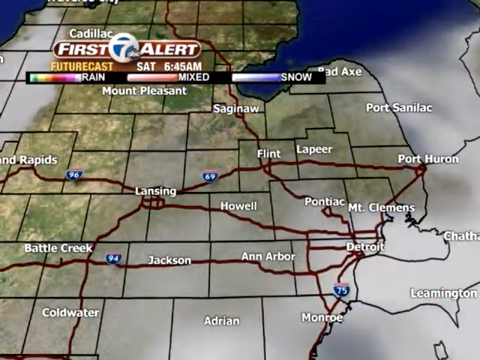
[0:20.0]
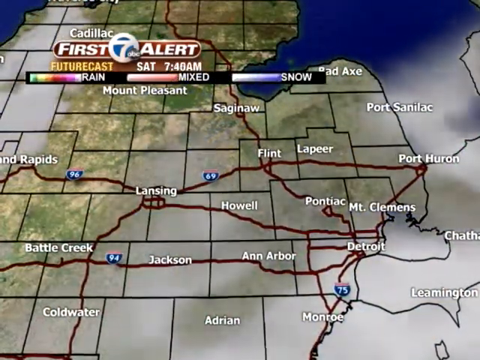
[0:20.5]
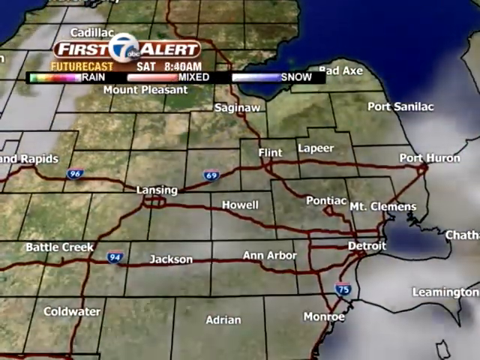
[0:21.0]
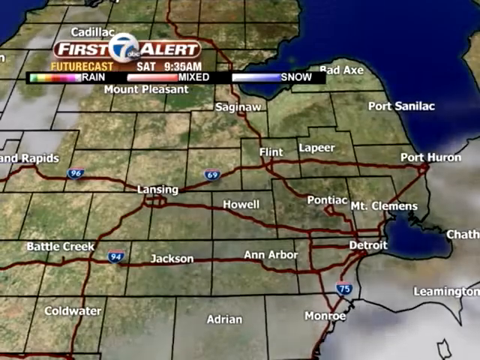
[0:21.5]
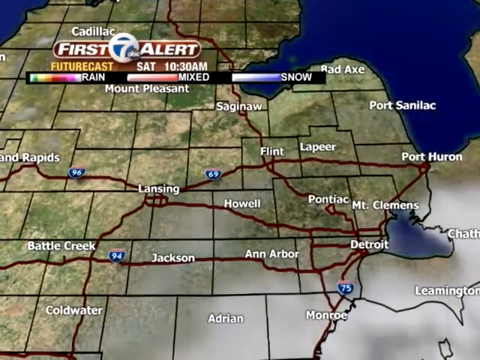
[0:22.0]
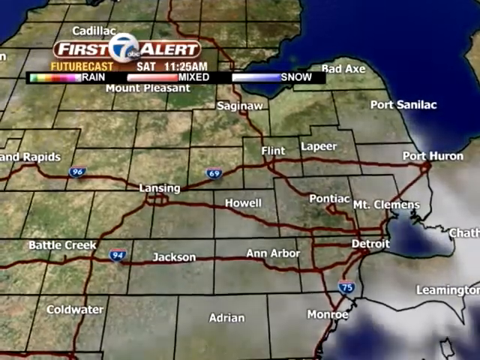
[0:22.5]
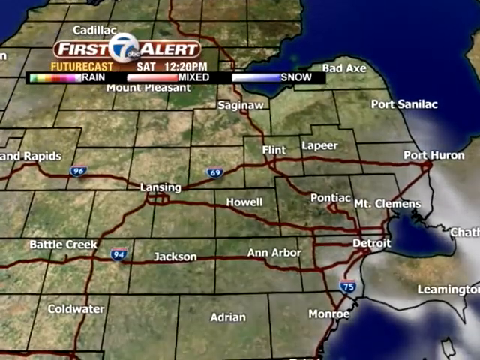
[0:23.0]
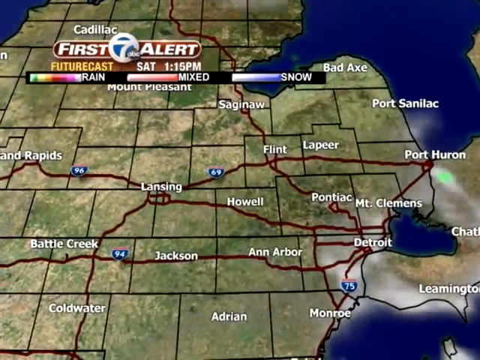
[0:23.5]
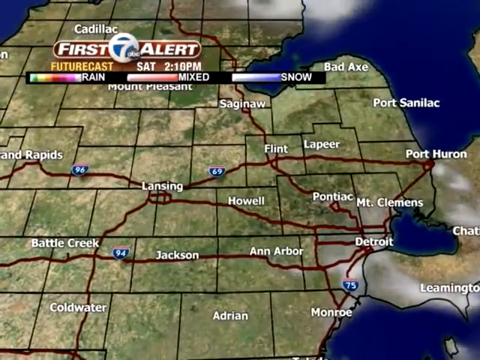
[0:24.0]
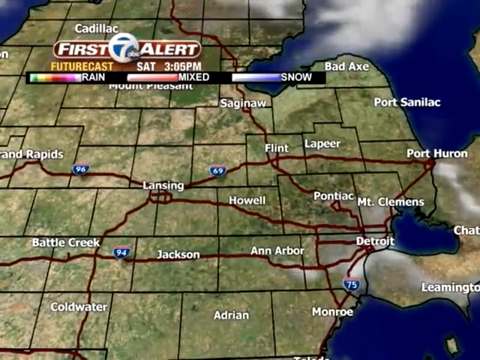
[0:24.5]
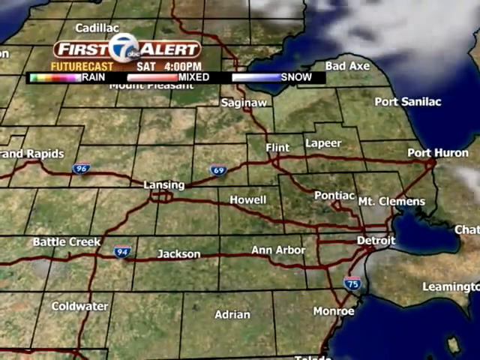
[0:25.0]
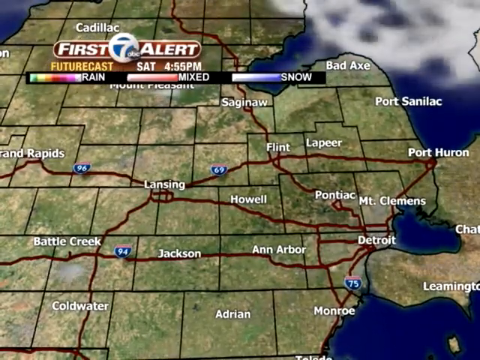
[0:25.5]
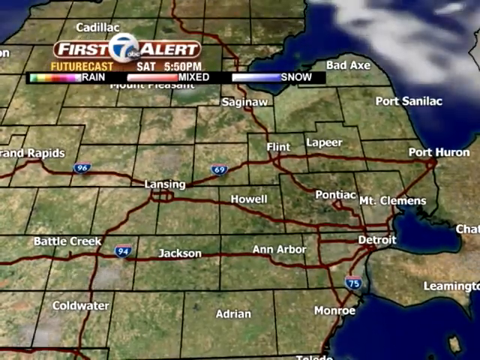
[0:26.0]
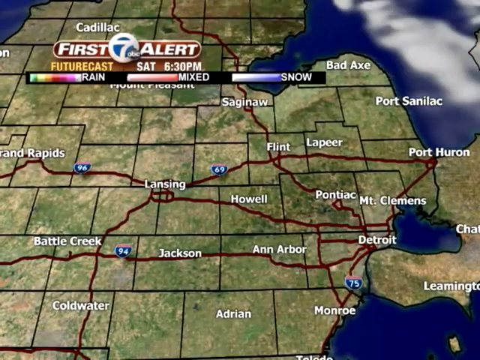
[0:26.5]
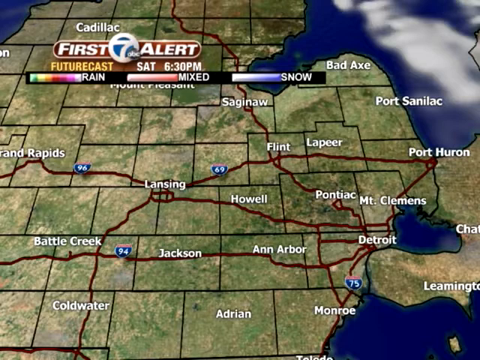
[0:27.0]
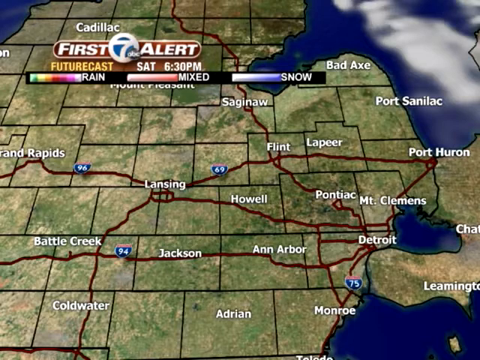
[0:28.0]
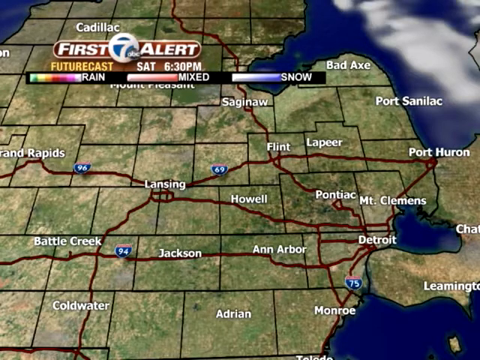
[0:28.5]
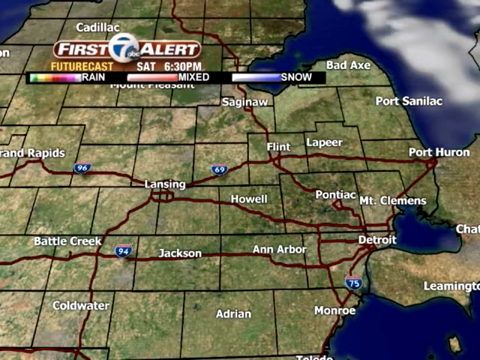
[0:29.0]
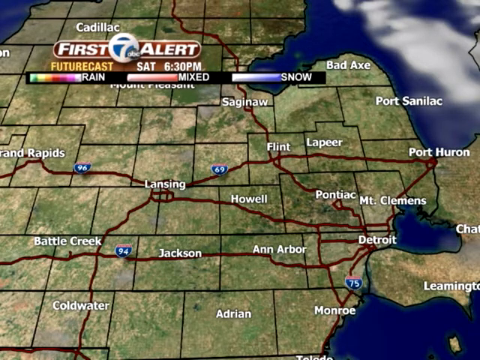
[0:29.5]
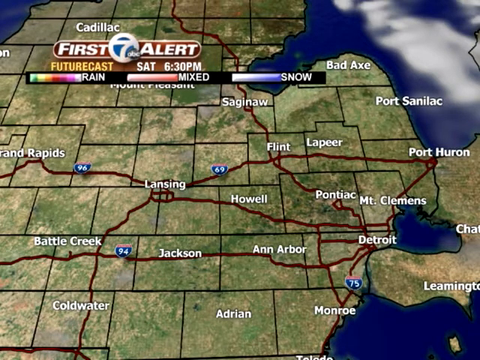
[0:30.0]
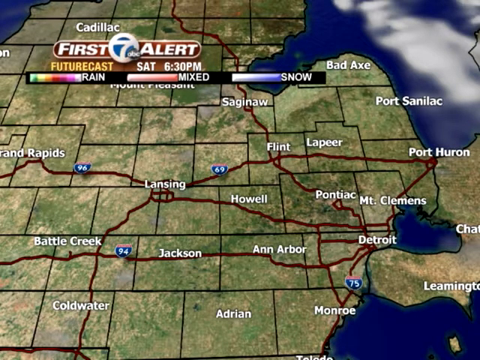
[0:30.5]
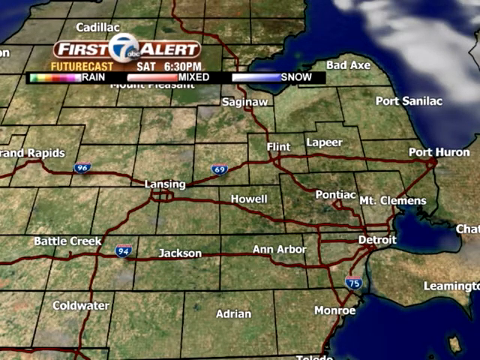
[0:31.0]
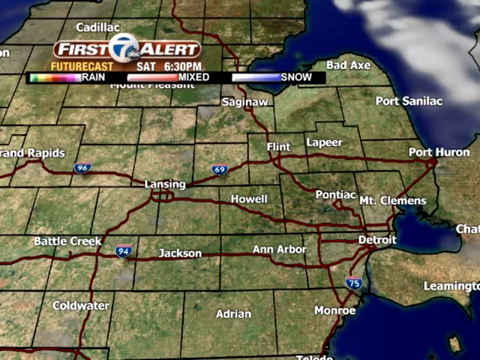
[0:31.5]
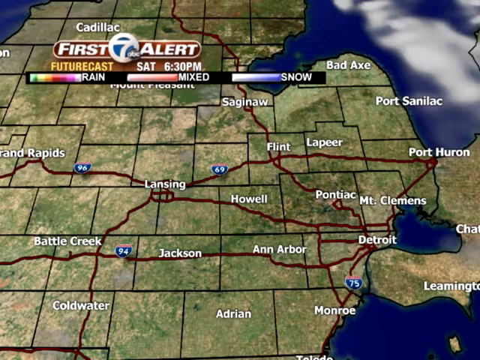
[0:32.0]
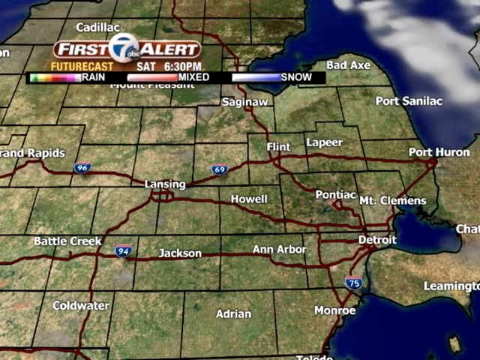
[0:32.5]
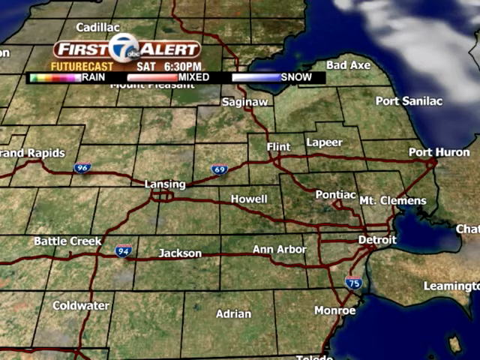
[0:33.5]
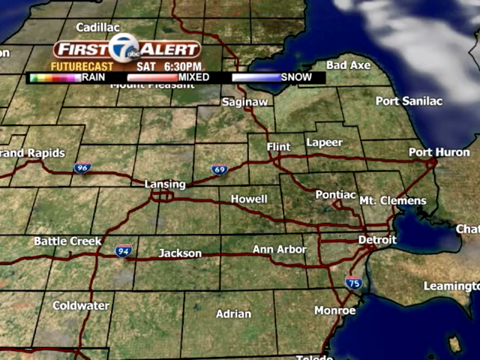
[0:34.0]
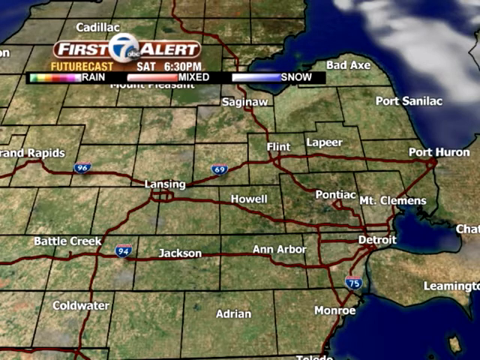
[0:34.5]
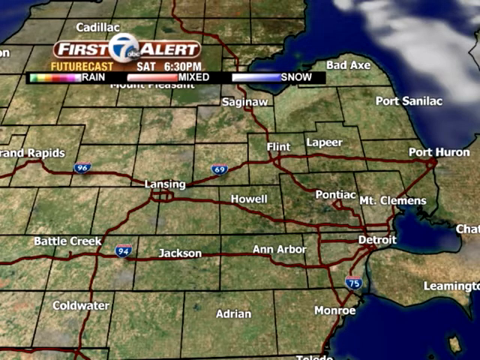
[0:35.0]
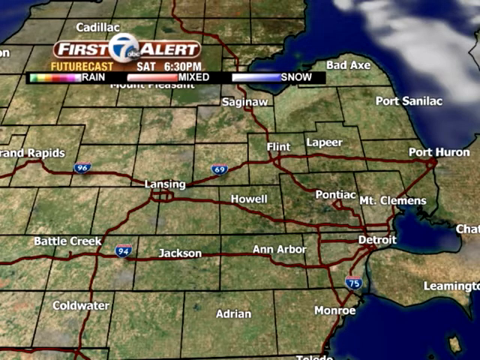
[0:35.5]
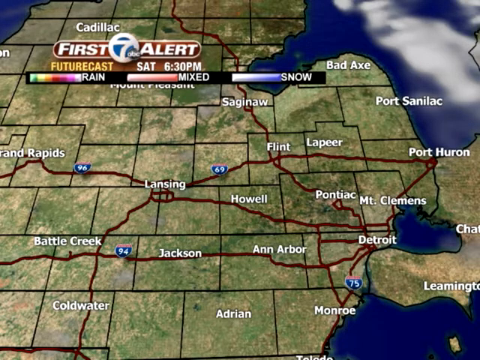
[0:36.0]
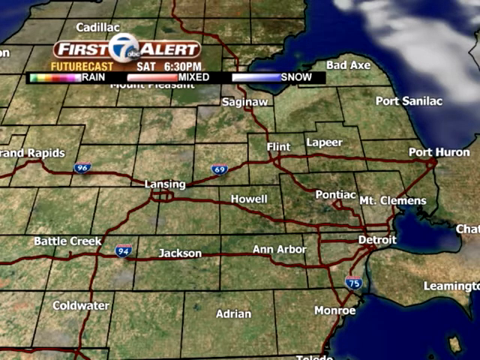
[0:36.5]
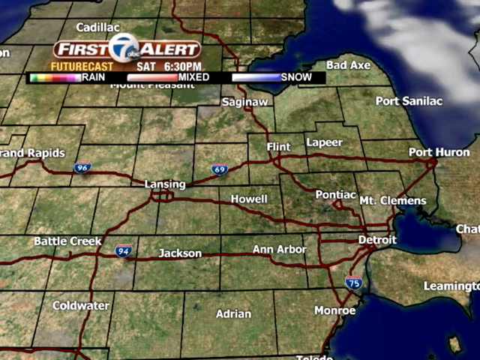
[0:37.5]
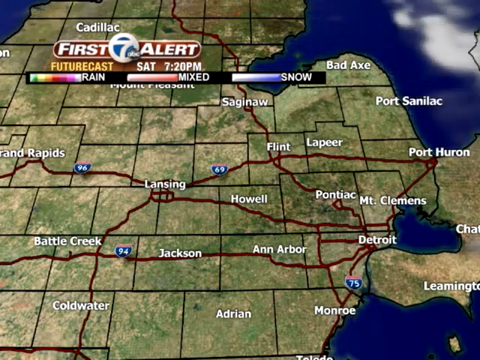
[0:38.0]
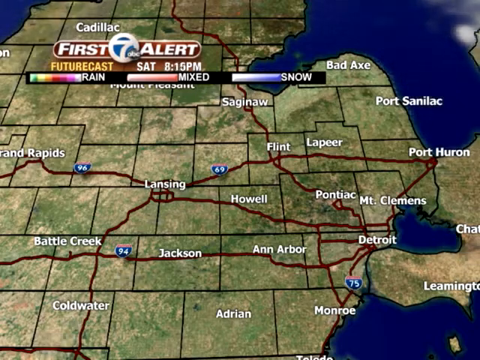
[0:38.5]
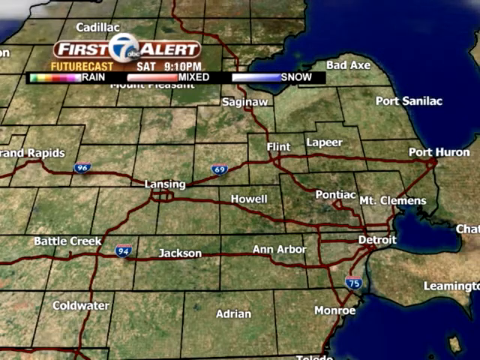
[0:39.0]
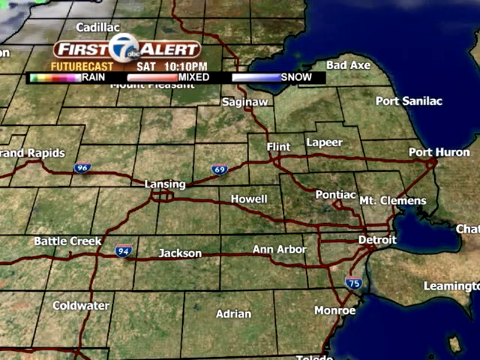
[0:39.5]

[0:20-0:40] A green map with black borders shows lakes that look like the Great Lakes in blue in the top right corner, with some blue in the top left corner as well. Plenty of white text marks cities including Detroit, Ann Arbor, Jackson, and Lansing. Red lines on the map indicate freeways, and numbers on the red lines include 94, 75, 69, and 96. Next to Detroit there is another lake on the right side, and there is another lake next to Monroe as well. On the right side of the screen toward the top, gray clouds pass by. In the top left corner, text reads "first alert" alongside a logo with the number seven and "abc".